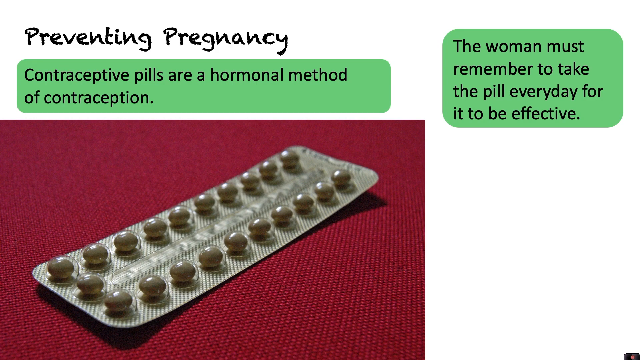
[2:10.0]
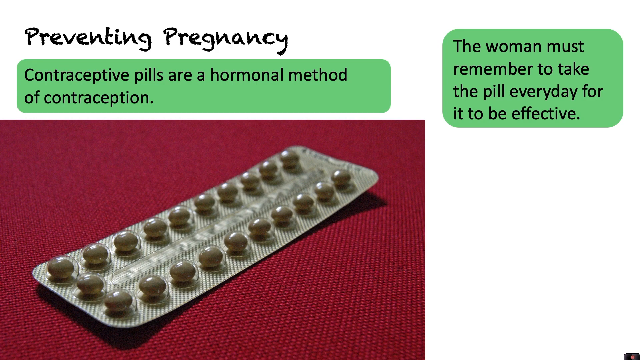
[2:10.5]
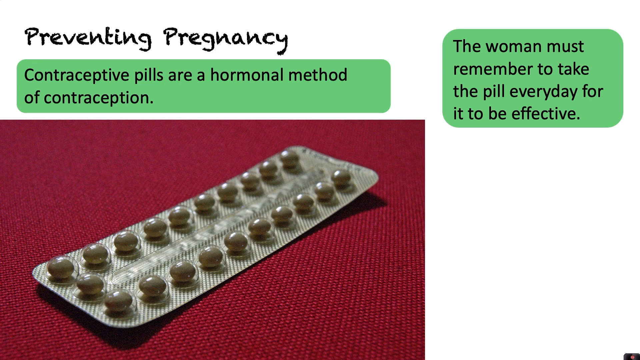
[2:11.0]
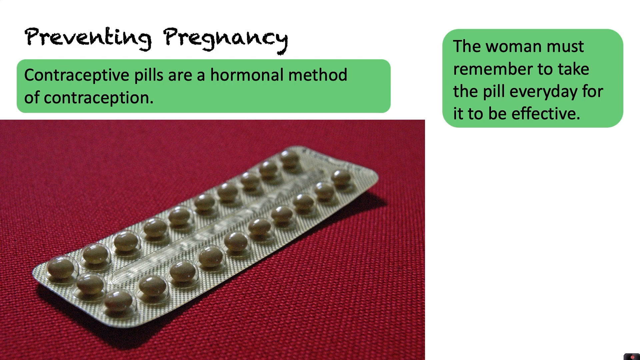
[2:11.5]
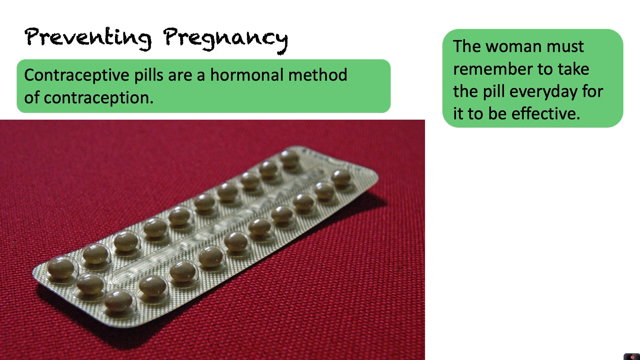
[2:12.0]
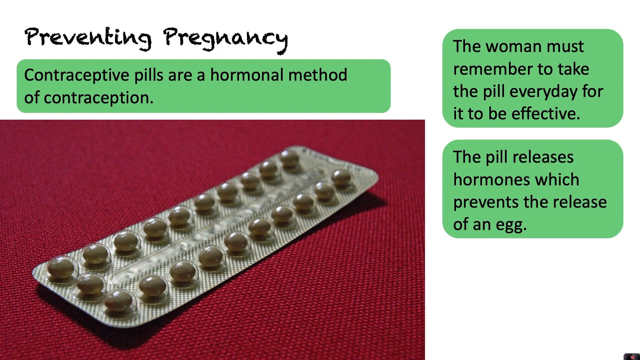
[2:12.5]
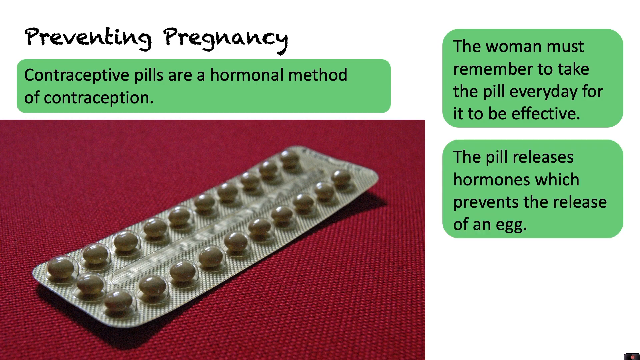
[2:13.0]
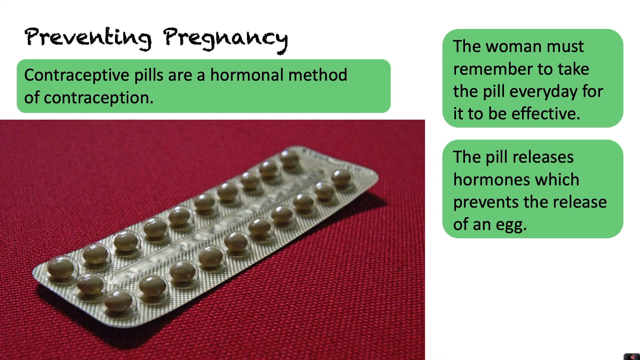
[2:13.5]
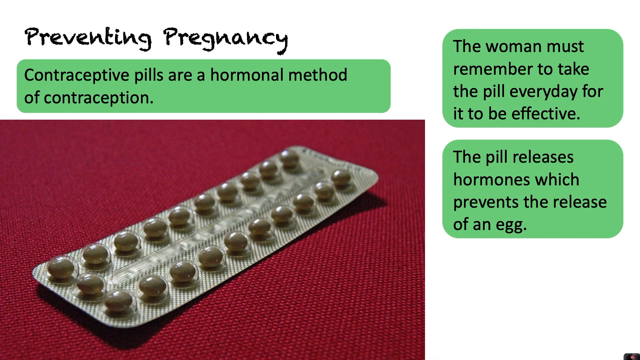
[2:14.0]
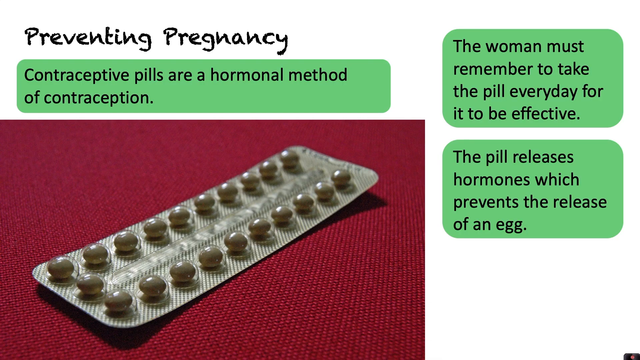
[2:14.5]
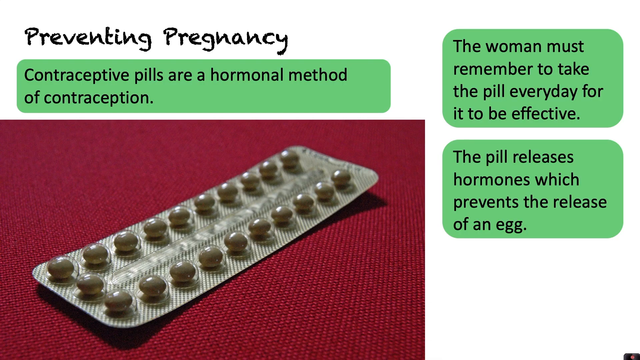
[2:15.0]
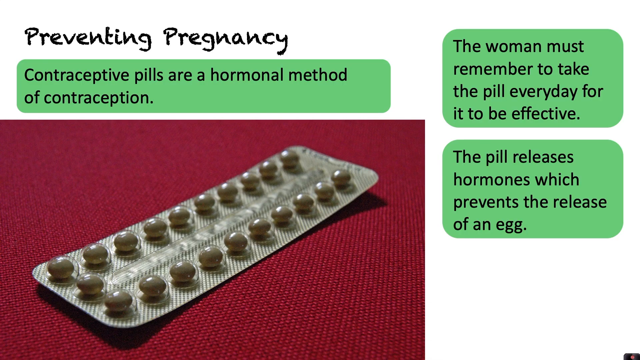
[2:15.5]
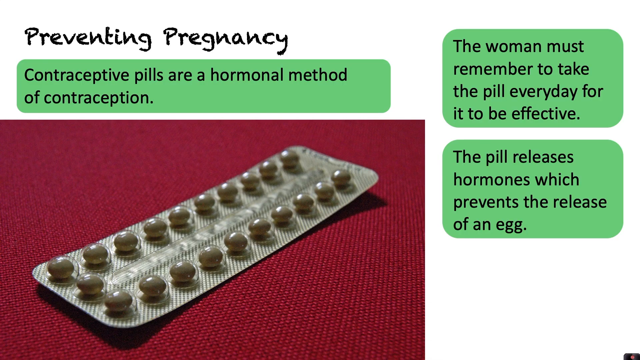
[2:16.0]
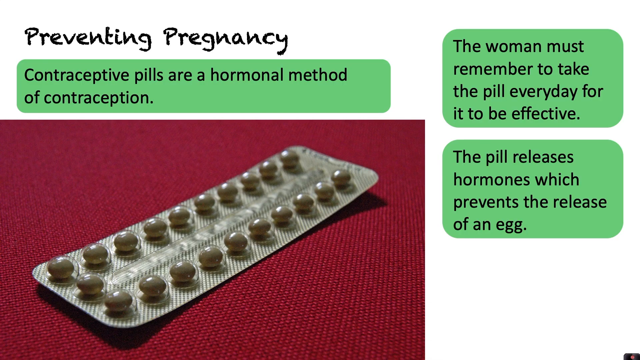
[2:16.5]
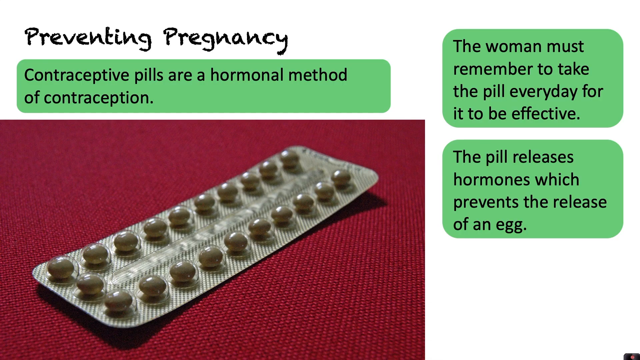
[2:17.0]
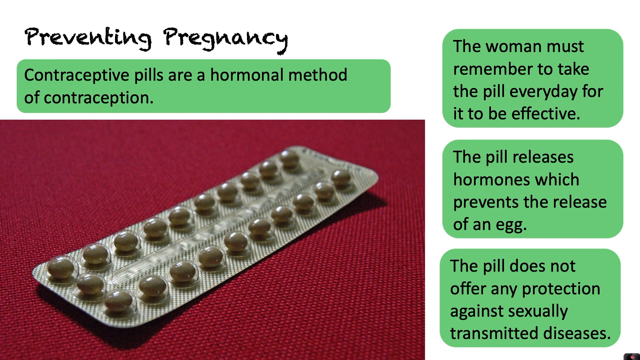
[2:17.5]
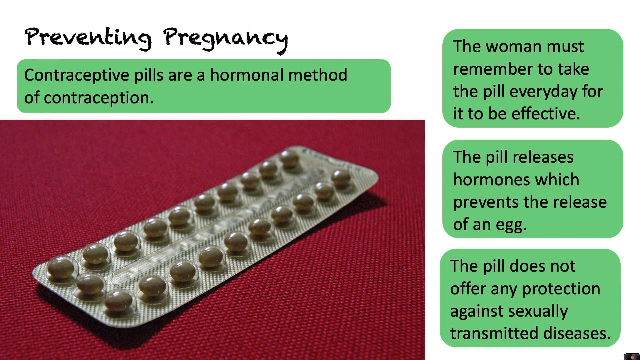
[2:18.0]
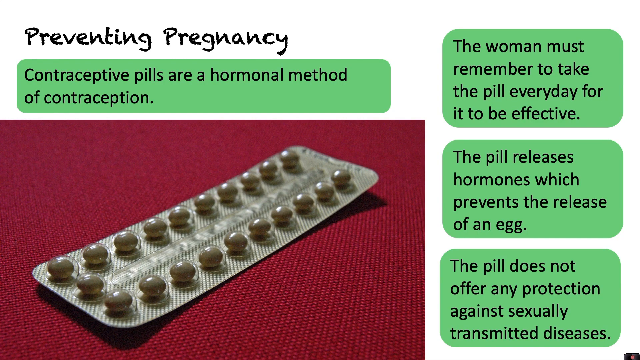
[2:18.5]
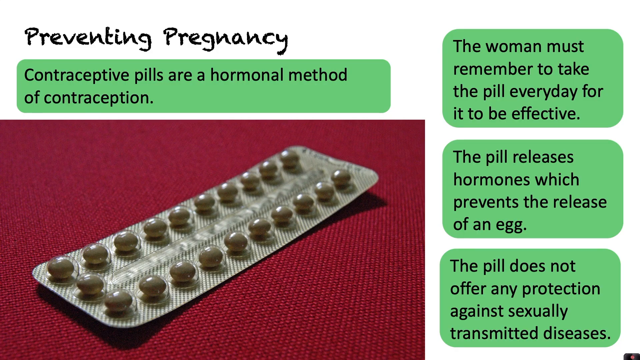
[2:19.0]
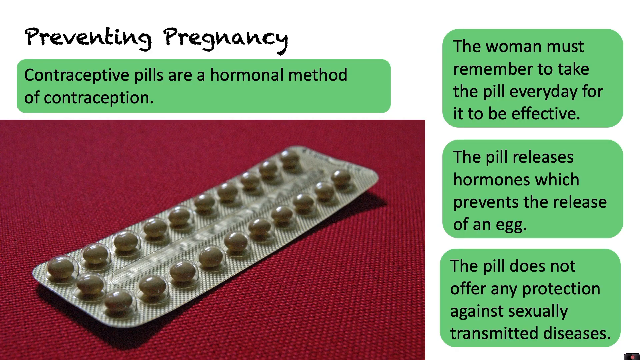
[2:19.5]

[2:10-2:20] On a white background, a black heading in the top left corner reads "Preventing Pregnancy." Below it, a small light green box contains black text reading "Contraceptive pills are a hormonal method of contraception." Beneath that is a large image of a strip of birth control pills showing two rows of small, round, gray pills sitting on some type of red fabric surface. On the right side of the slide, toward the top, a small green rectangular box reads "the woman must remember to take the pill every day for it to be effective." Then another green box pops up underneath reading "the pill releases hormones which prevents the release of an egg," and below that another box pops up reading "the pill does not offer any protection against sexually transmitted diseases."